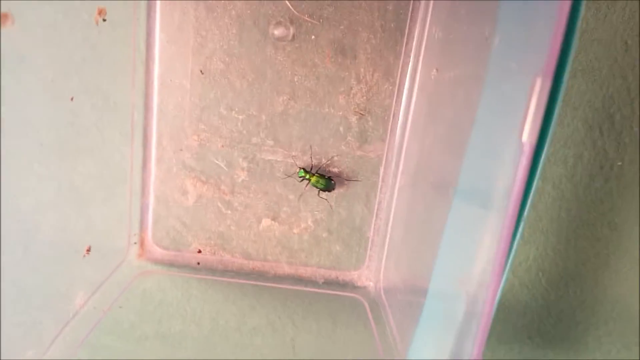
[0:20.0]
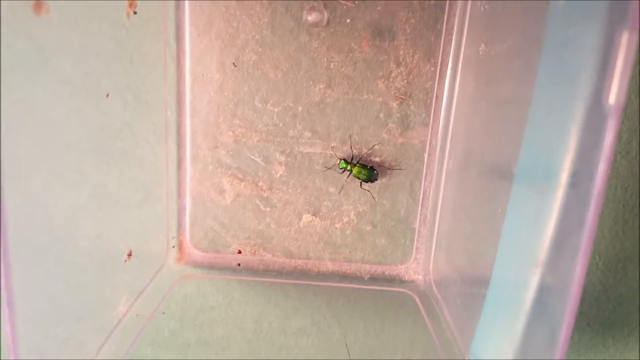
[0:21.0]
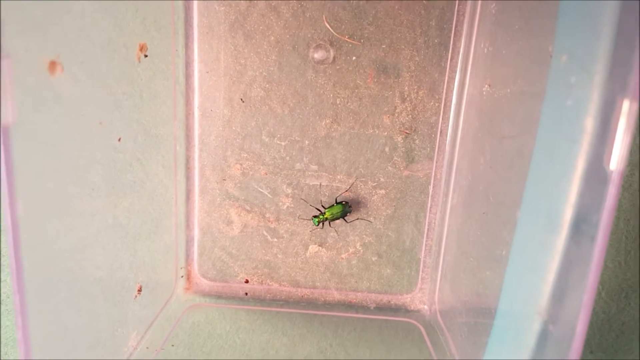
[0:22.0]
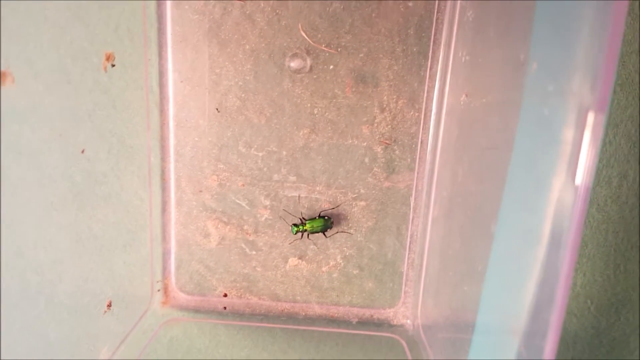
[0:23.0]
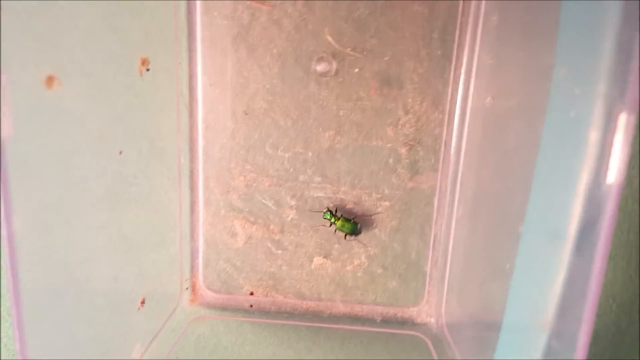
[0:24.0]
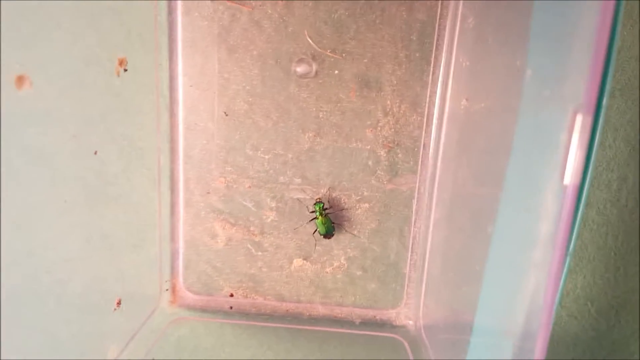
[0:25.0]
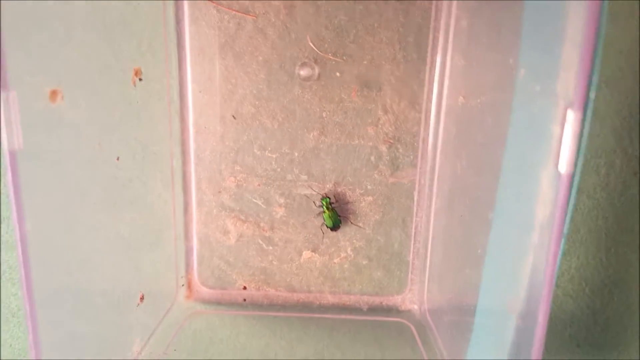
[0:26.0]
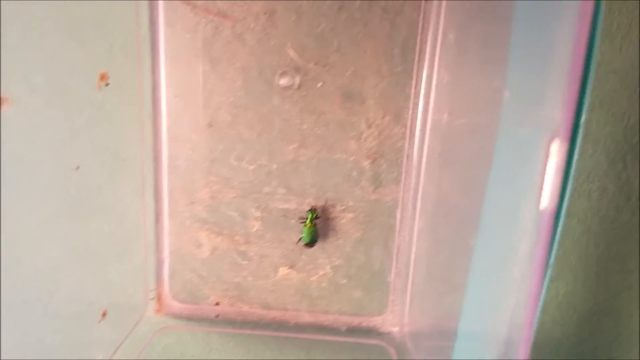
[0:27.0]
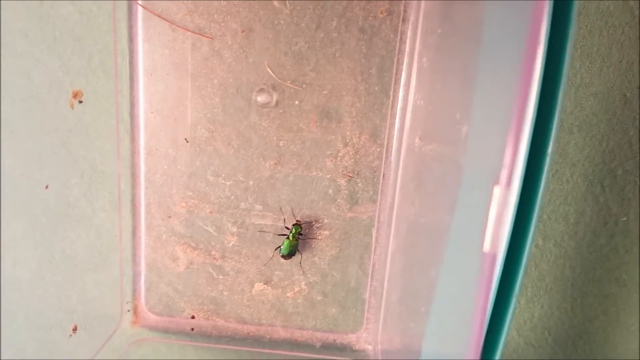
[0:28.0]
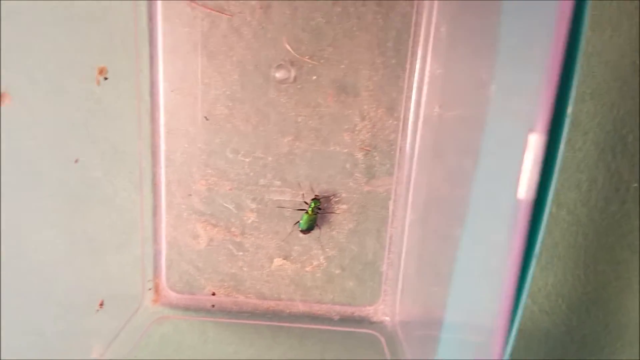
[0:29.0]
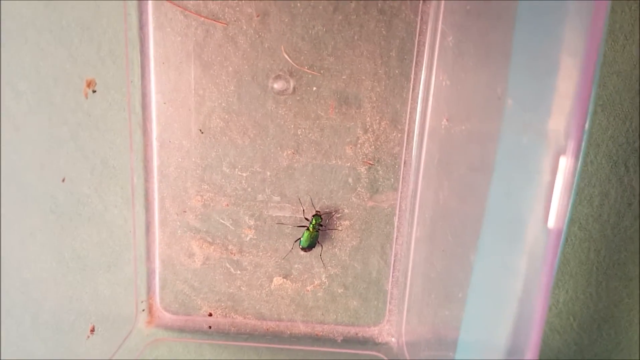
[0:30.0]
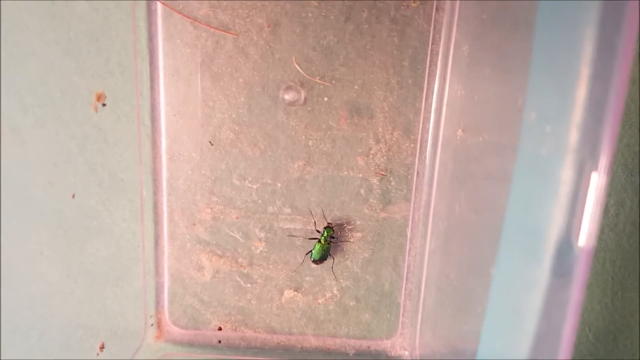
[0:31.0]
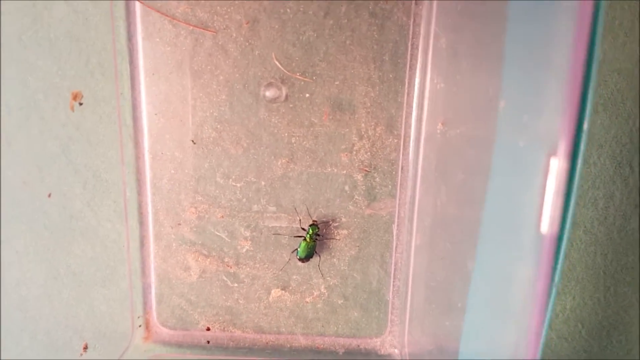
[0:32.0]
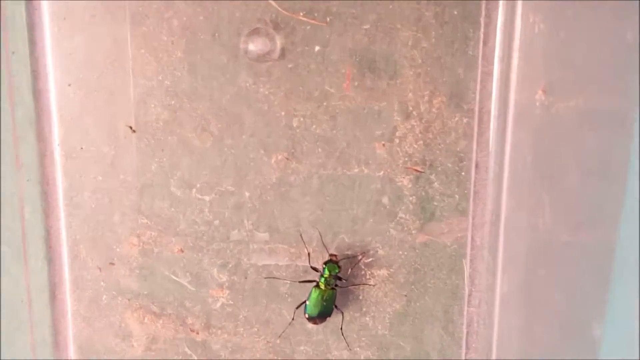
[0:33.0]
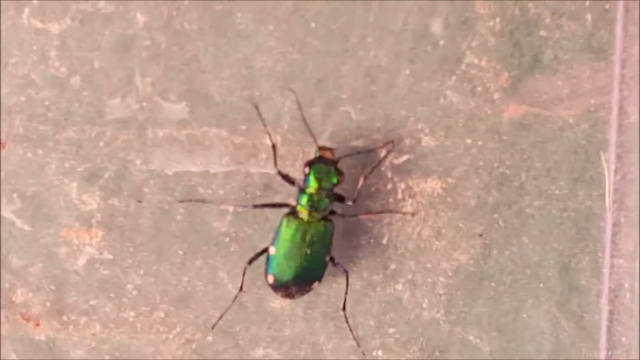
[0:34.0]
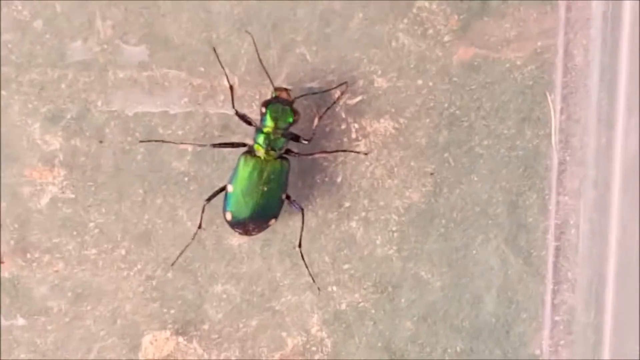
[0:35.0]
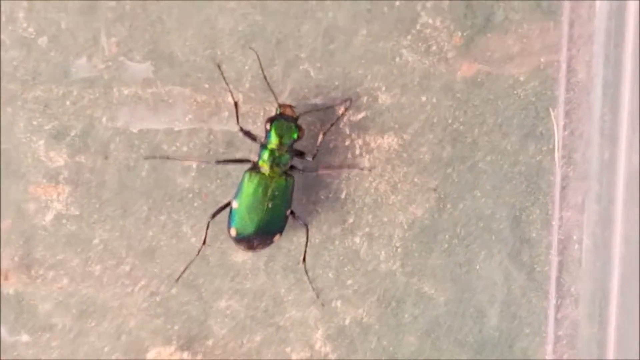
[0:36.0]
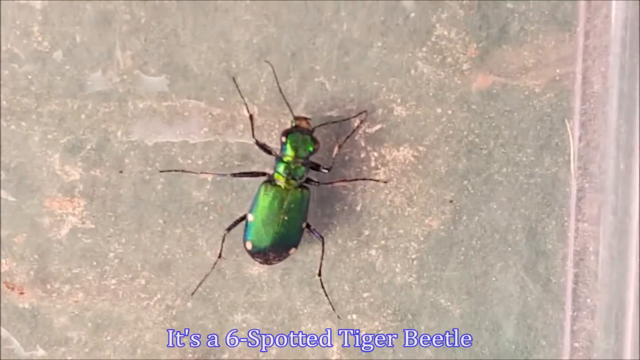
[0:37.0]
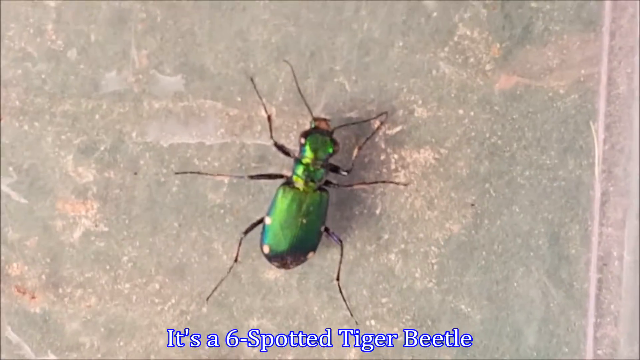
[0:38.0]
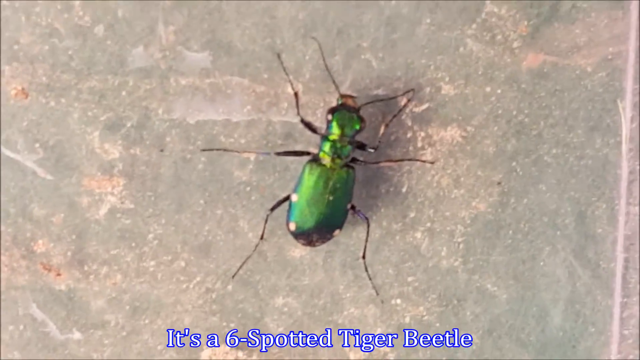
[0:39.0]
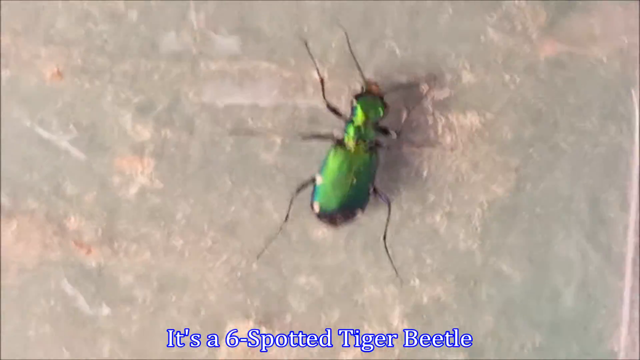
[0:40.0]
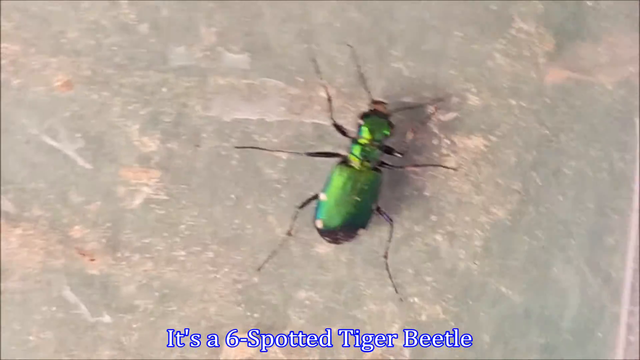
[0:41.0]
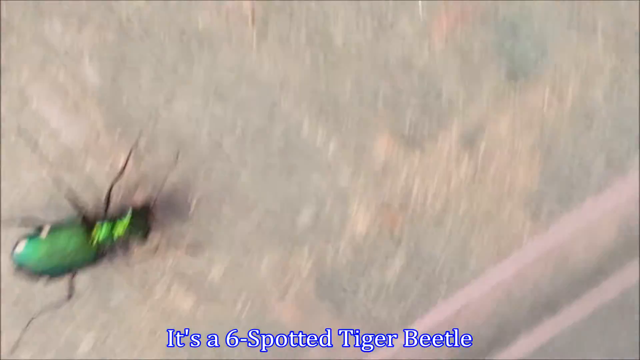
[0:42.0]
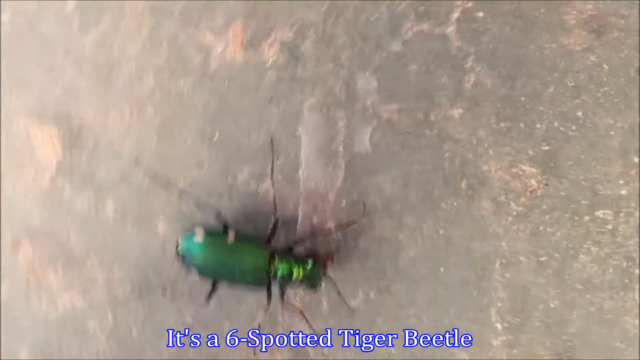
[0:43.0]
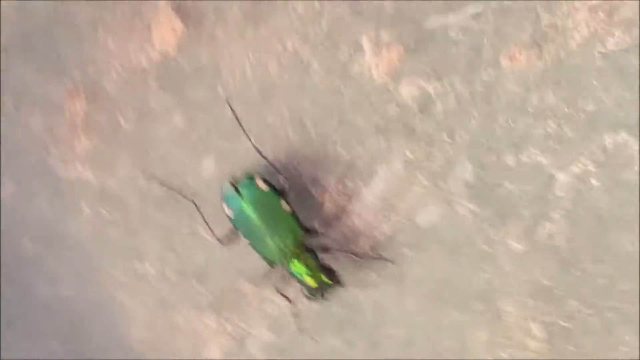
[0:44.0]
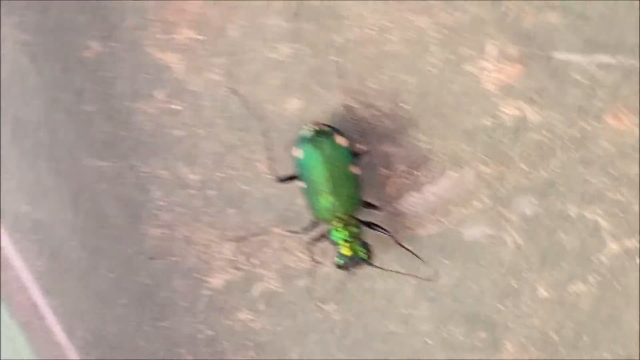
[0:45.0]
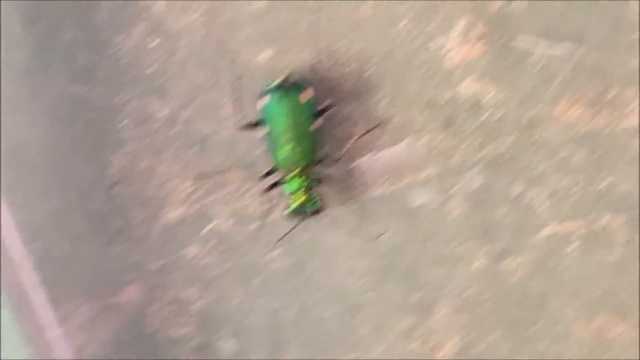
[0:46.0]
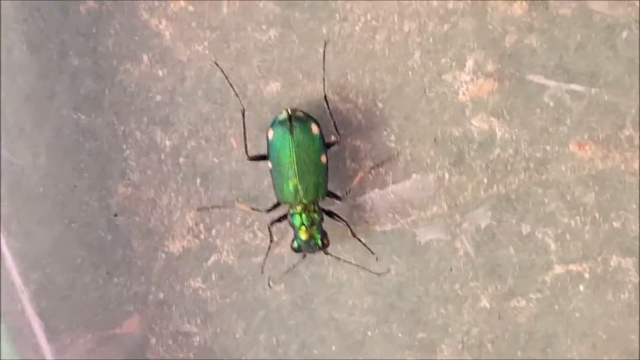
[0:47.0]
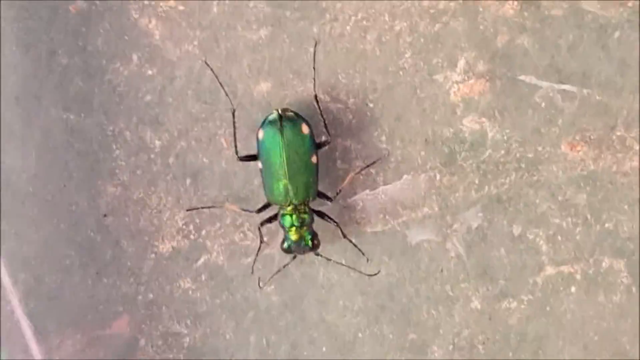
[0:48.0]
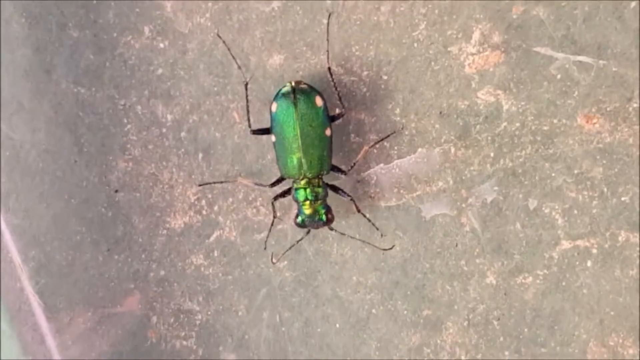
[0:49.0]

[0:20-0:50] The camera zooms in on the beetle as it walks around the bottom of the plastic container. Zoomed right in, the beetle is very metallic, with highlights shining off the side of its shell. It seems to have six legs and two very long antennae at the front, and it has white spots running down its side. Words appear at the bottom of the screen identifying it as a six-spotted tiger beetle. Four spots are visible; the other two are hard to see, possibly at the back and obscured by the beetle's shininess. The top of the head is a more yellowy-green colour, while the body is more of an emerald green.